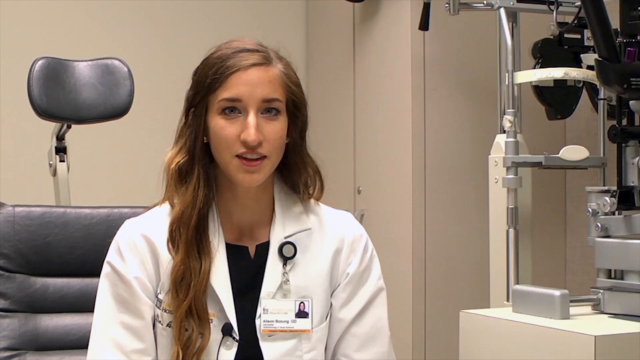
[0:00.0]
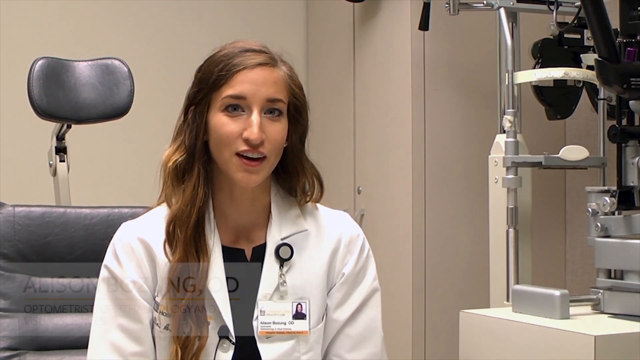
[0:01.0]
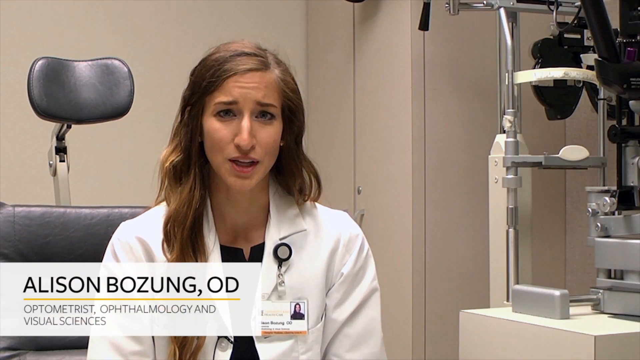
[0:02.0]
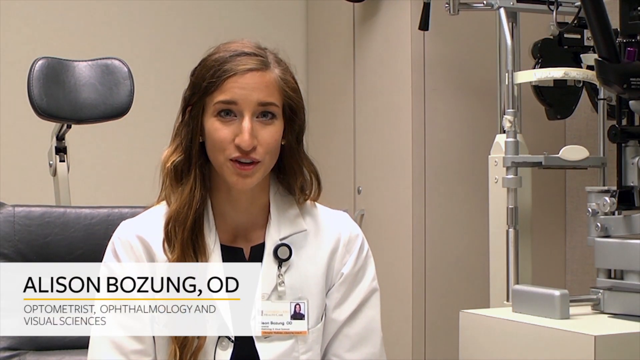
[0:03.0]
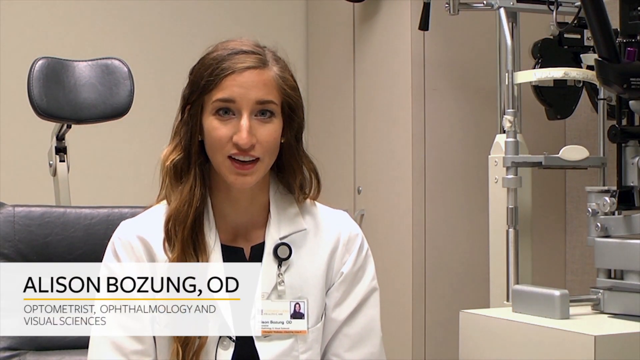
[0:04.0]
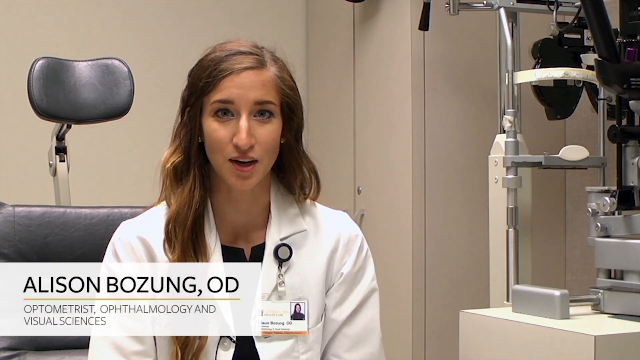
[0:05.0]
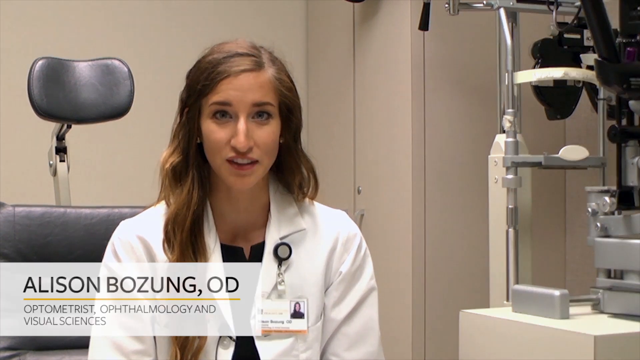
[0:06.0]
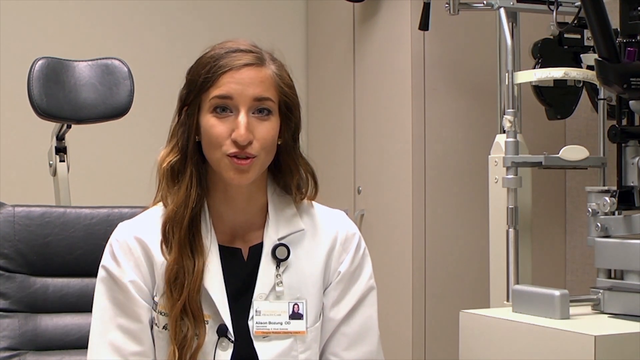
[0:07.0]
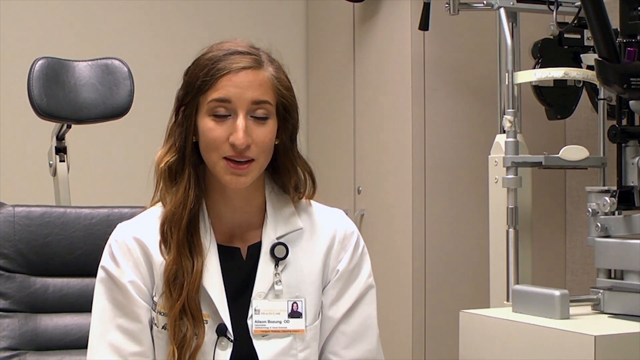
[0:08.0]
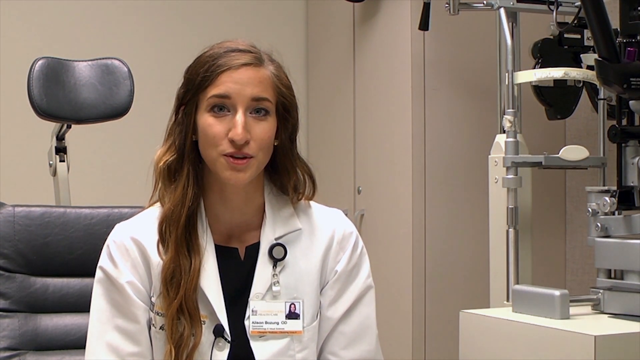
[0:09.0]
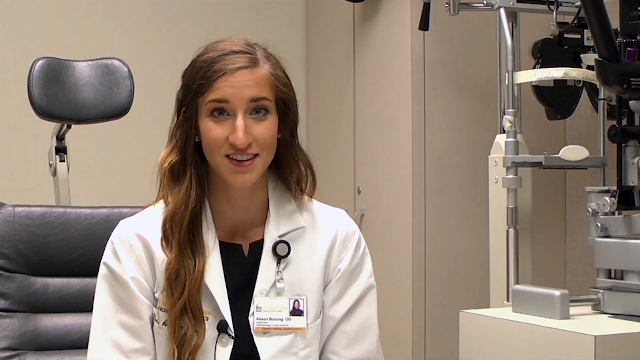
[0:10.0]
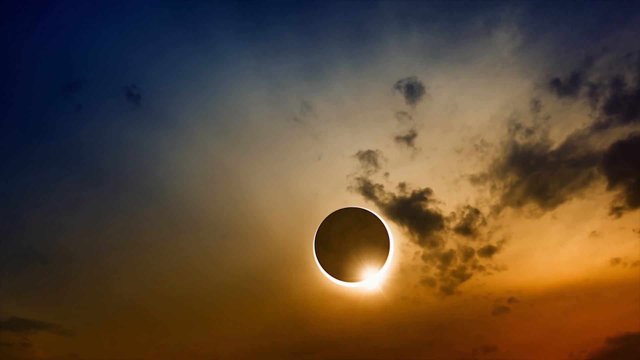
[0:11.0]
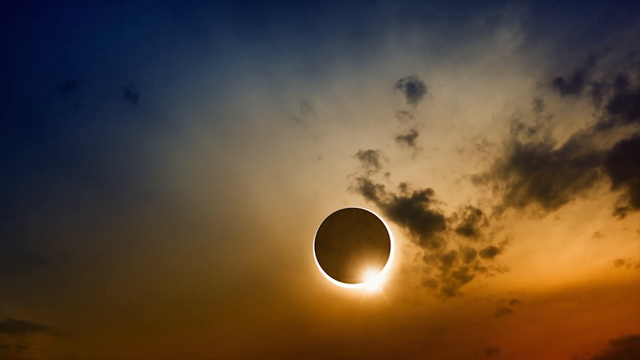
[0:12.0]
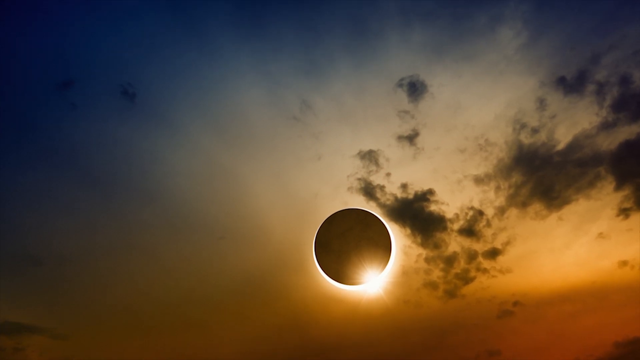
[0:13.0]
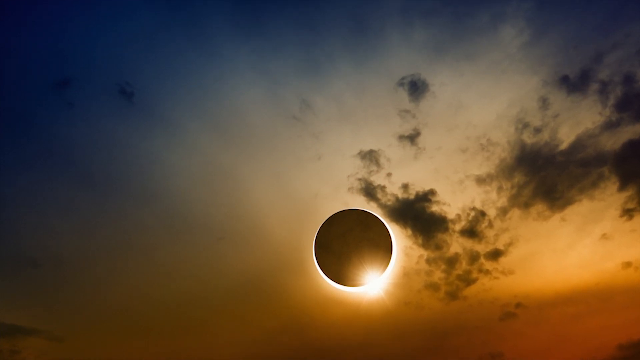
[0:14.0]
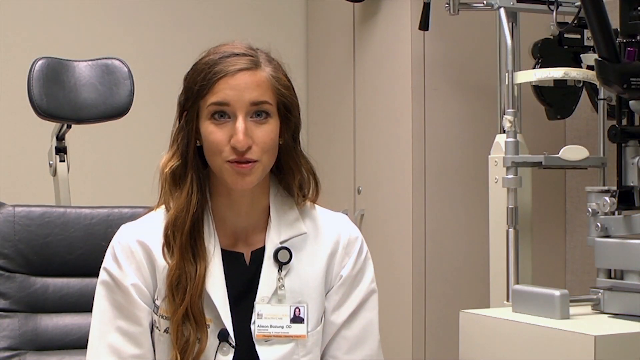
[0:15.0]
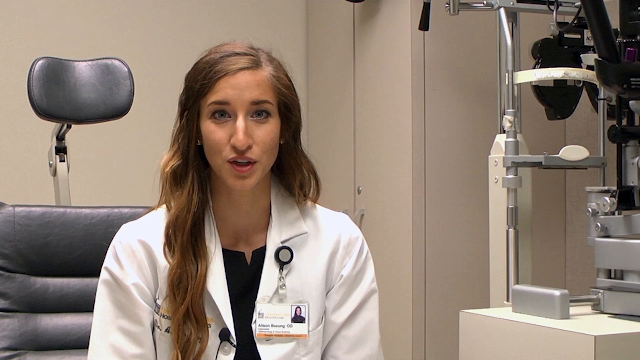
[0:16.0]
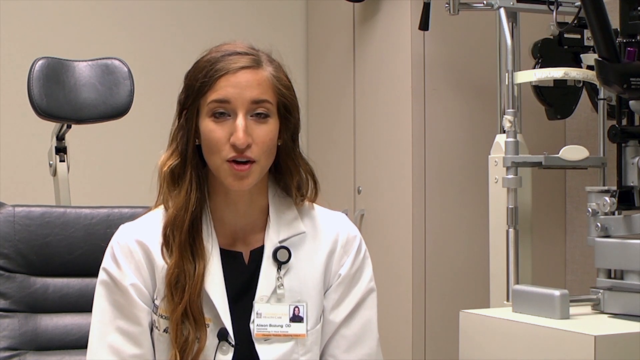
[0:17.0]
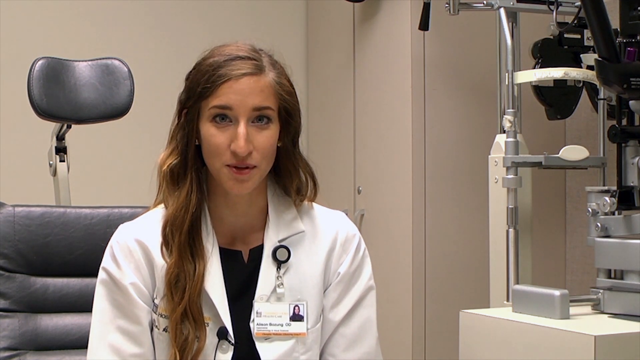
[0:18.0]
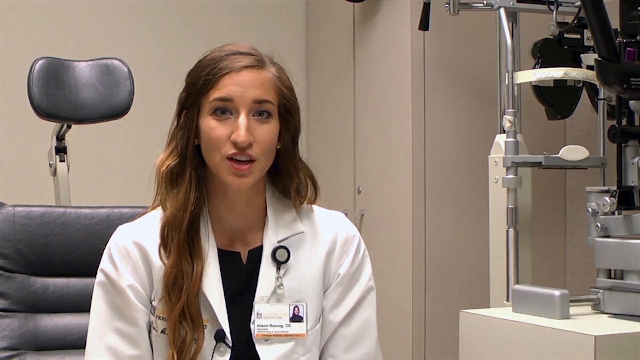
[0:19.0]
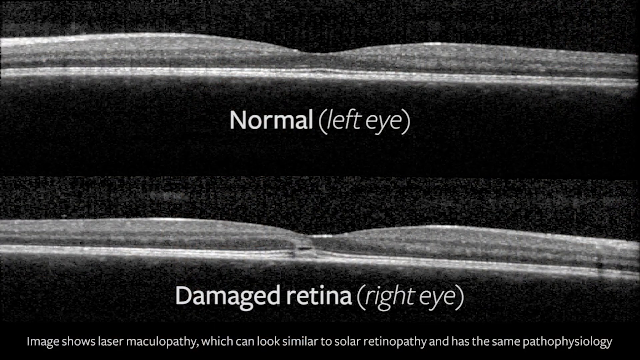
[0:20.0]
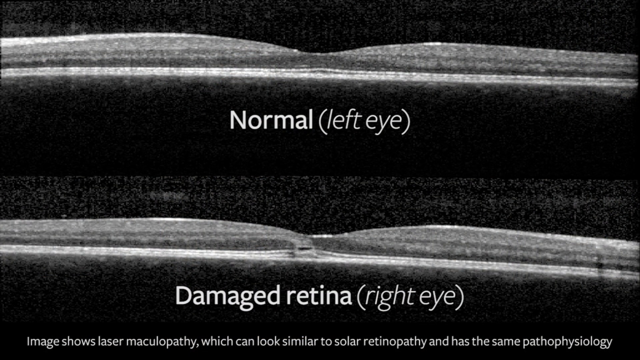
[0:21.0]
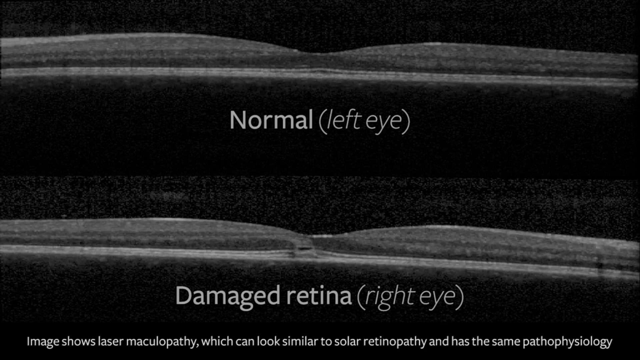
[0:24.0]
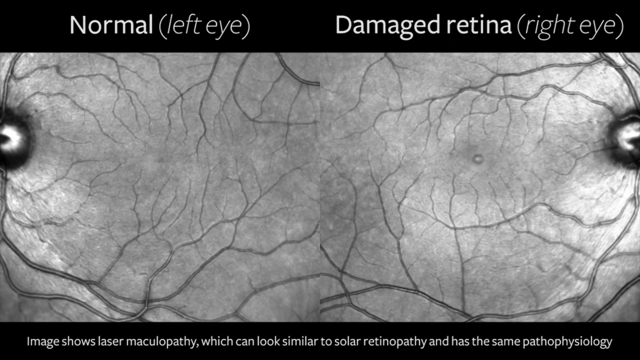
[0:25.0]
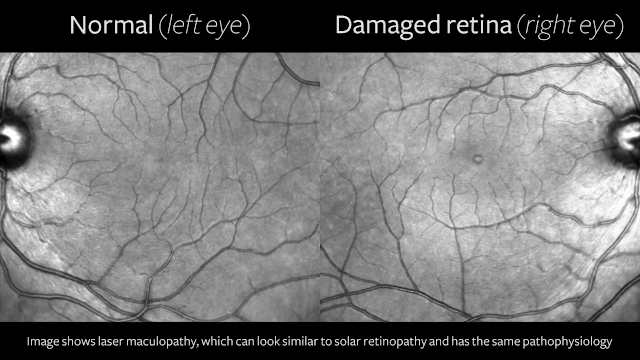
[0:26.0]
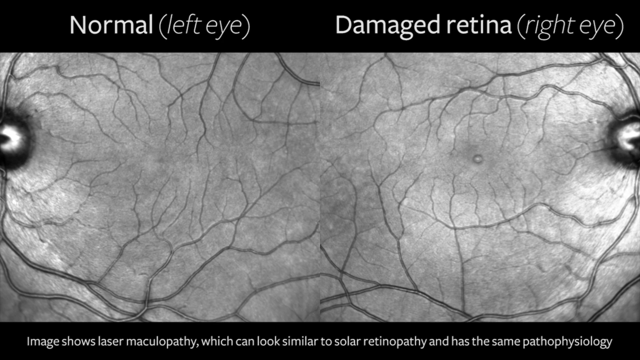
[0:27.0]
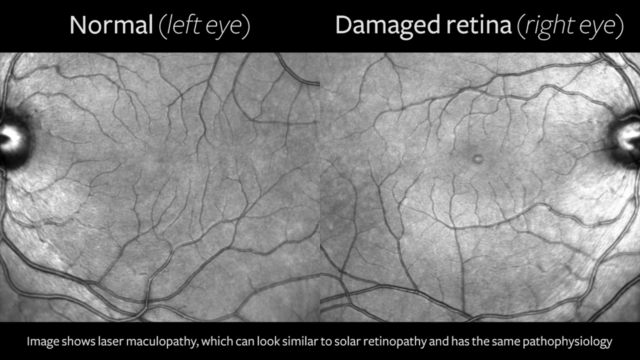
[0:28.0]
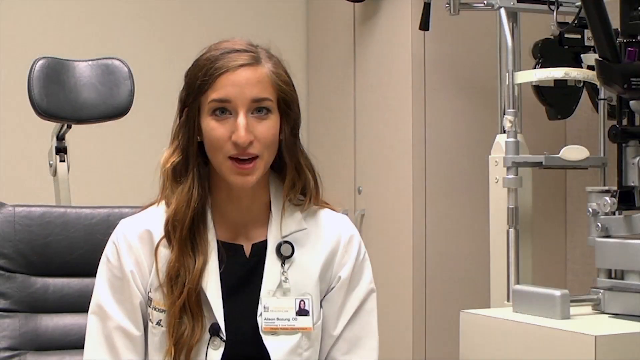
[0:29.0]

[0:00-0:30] A Caucasian female doctor is seated in a patient's exam chair in an exam room, looking at the camera. Her long, light brown hair is draped over her right shoulder in the front and pushed over her back on her left side. She wears a white lab coat with a black blouse underneath. Her identification lanyard is pinned to her upper lapel on her left side; the pin holding it is a circle, black around the edge and gray in the center. The room around her is a light tan tone, and the exam chair she is seated in is black leather and metal. To her right is ophthalmic equipment for an eye exam. In the bottom left corner, a white rectangular banner appears with black text that says "Allison Bozung, OD, ophthalmology and visual sciences ophthalmologist." She continues to speak to the camera, and then the view changes to an image of a solar eclipse. The sky changes in a gradient from orange across the bottom, to somewhat yellow in the center, to darker blue at the top. The moon moves over the sun from left to right, with the sun just visible around the right edge and bottom right edge. A few scattered clouds are in the sky, primarily to the right.